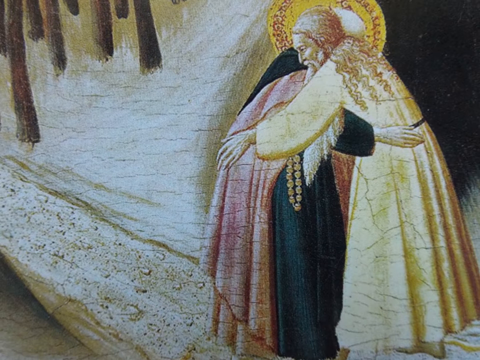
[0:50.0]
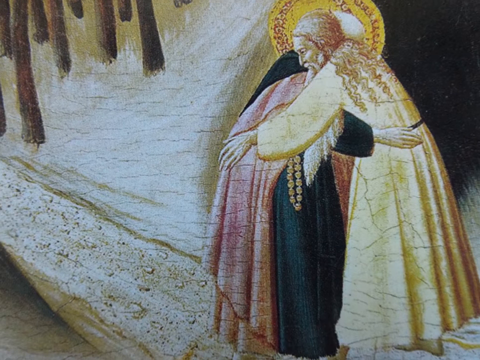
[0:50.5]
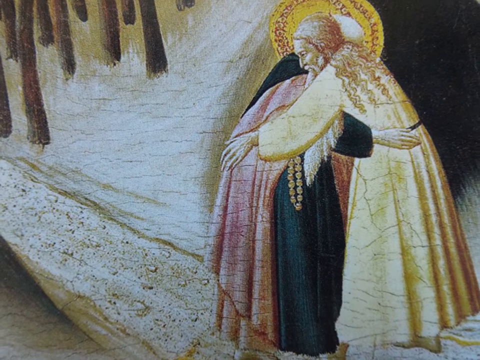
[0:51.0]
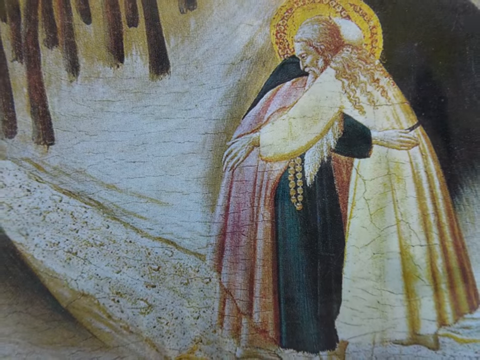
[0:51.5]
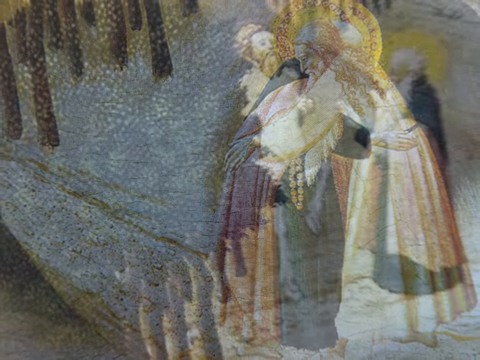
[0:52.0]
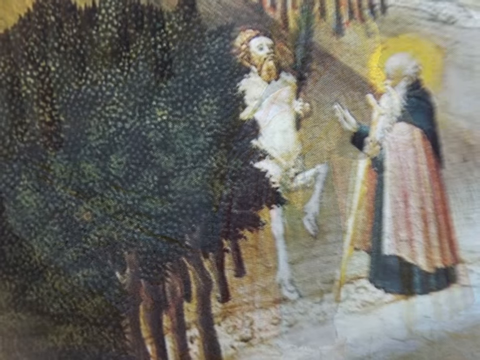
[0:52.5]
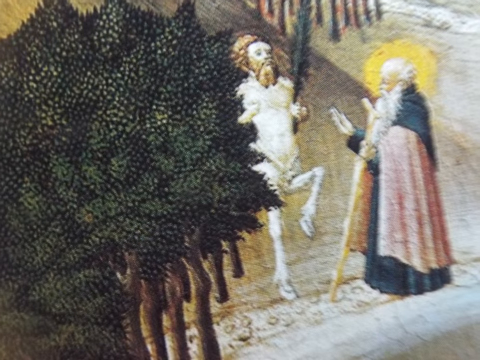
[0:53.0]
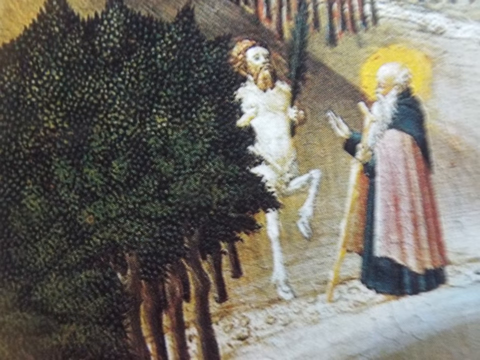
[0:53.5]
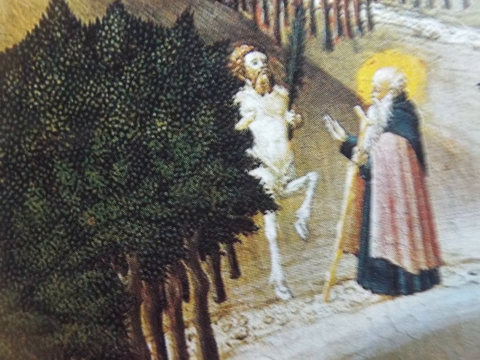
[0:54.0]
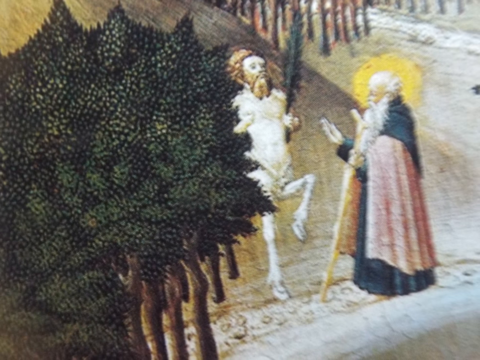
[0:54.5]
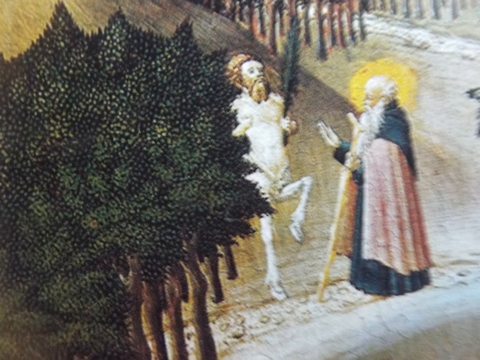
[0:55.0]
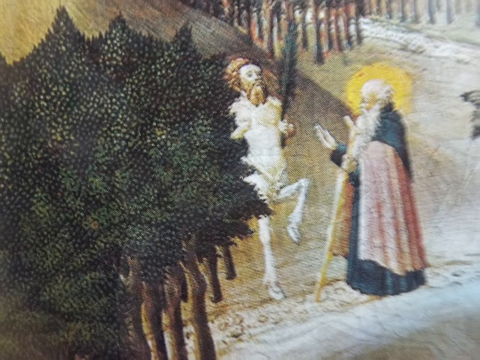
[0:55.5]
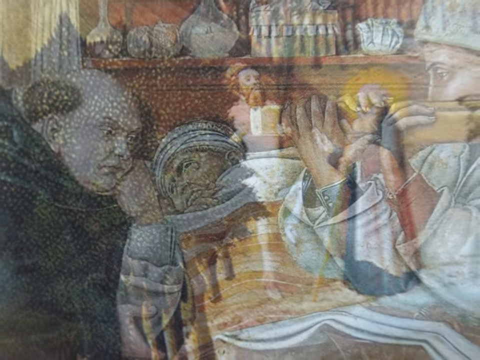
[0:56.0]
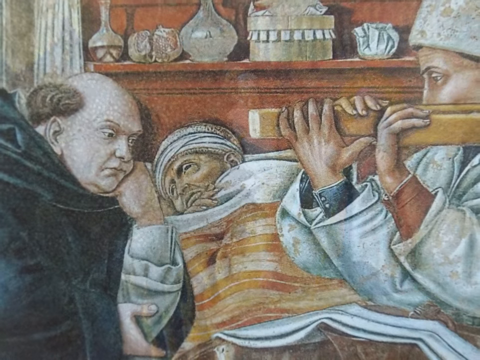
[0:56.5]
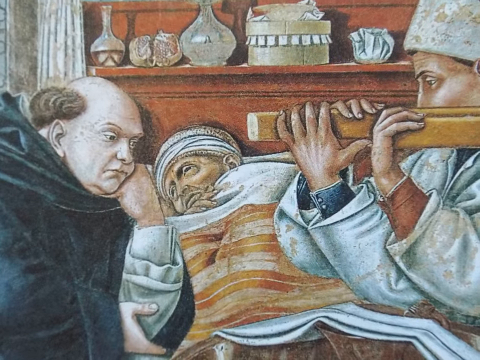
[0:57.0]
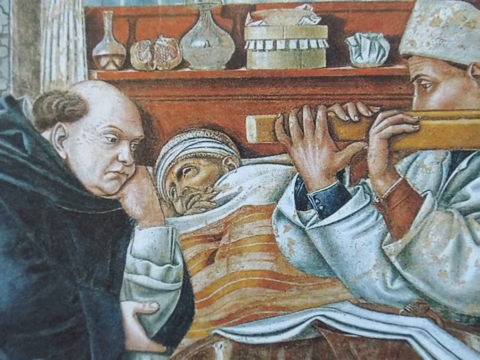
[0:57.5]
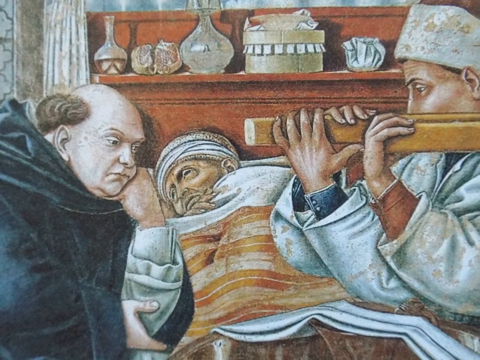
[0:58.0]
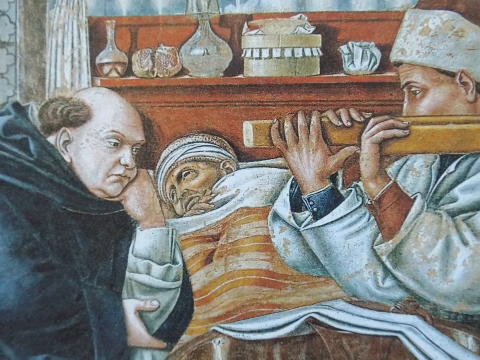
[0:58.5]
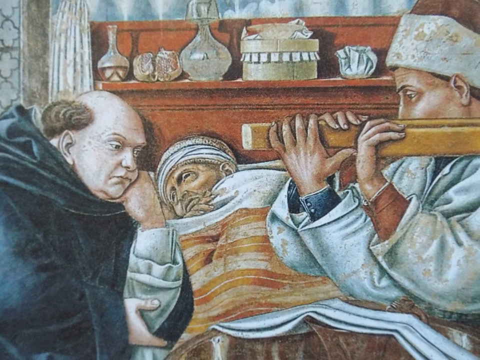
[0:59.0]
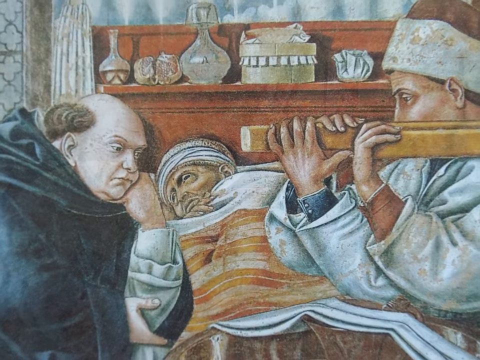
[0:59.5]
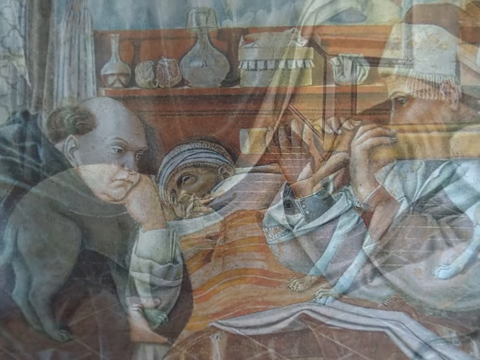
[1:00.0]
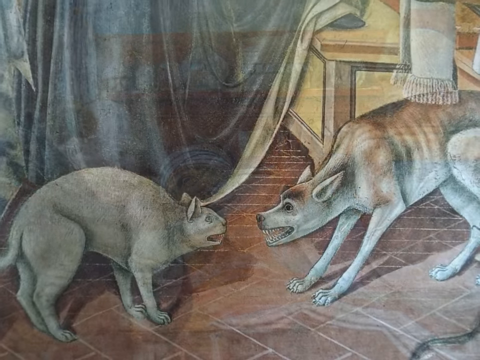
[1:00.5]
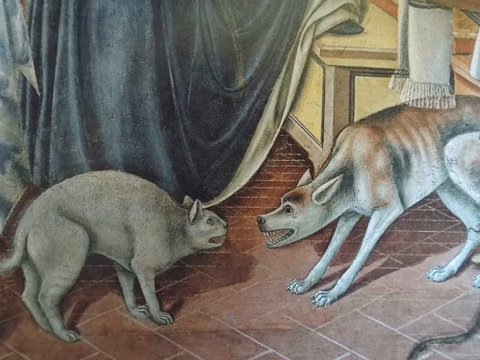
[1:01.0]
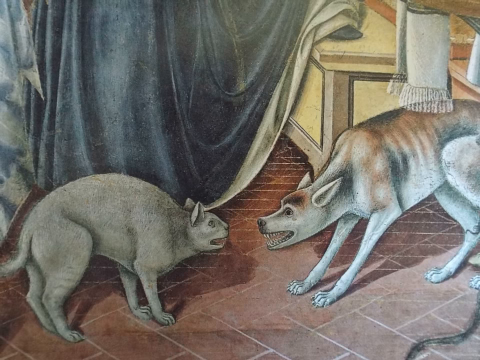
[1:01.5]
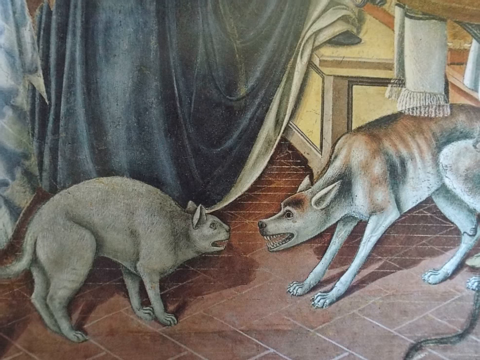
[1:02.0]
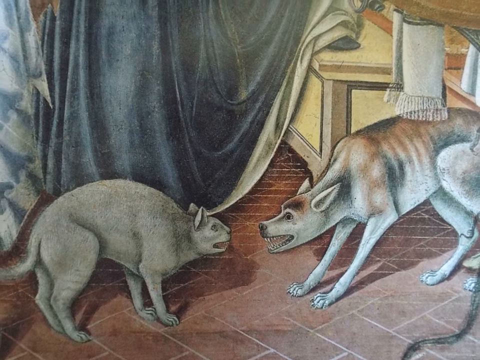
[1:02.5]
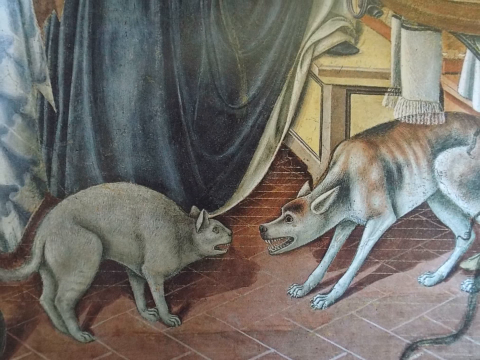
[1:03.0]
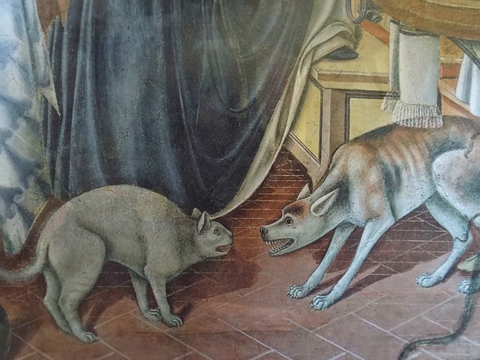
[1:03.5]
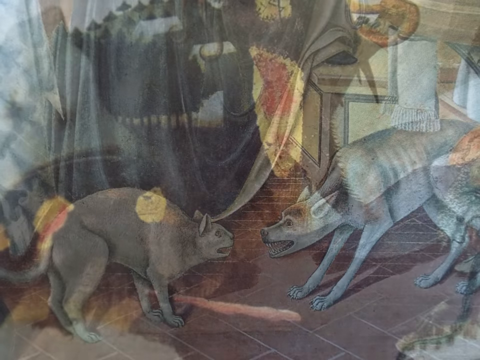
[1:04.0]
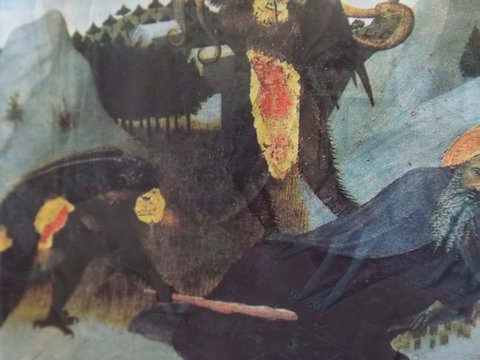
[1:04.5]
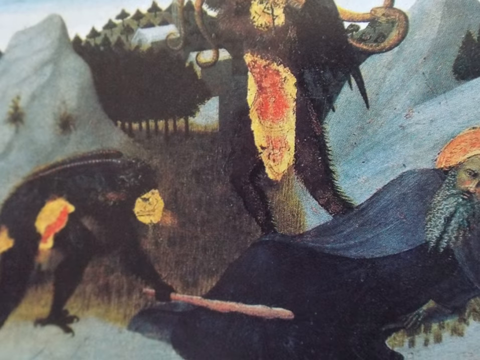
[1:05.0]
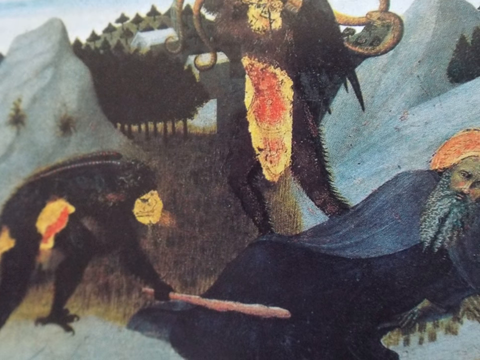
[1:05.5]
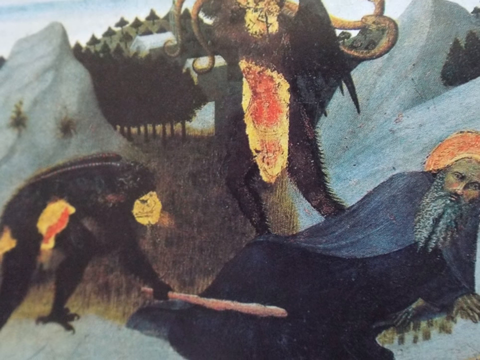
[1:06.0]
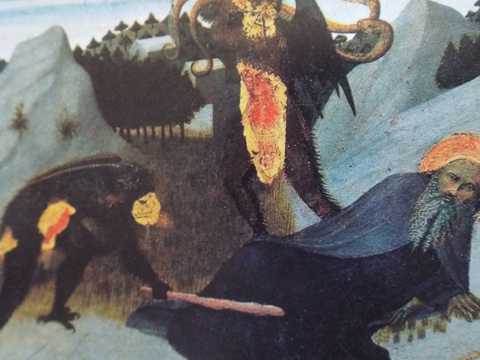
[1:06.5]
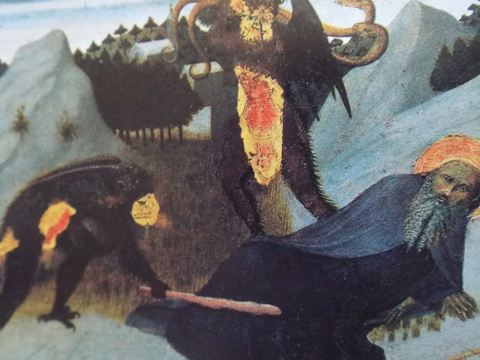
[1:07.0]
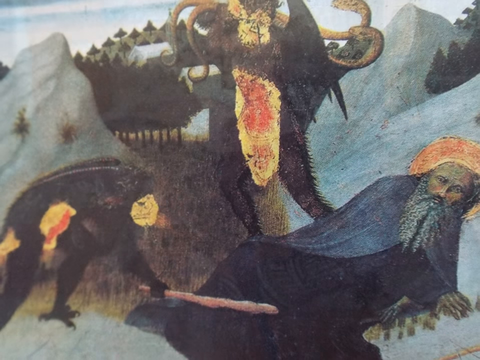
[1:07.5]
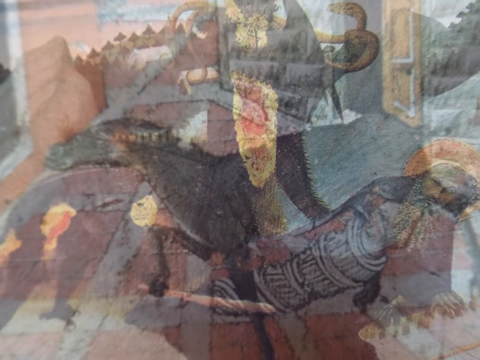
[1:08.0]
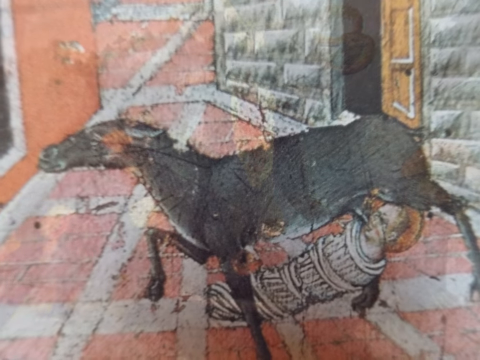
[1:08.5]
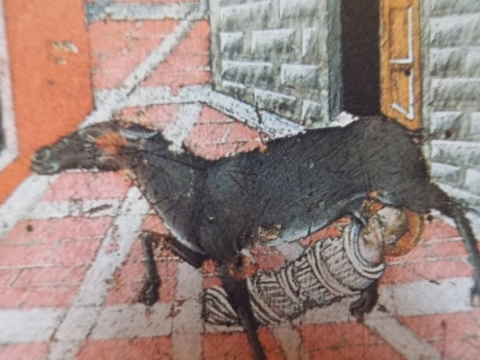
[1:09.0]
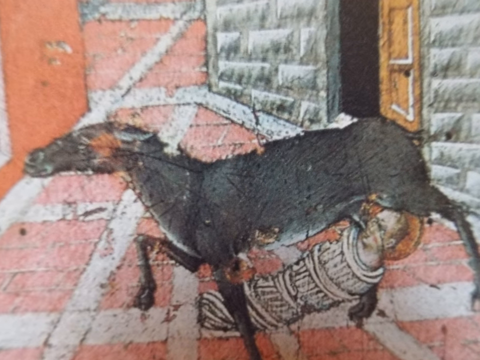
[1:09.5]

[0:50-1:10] A closer view shows the man standing naked on top of the hill. His feet look like hooves and are very bony, and in his left hand he holds a branch of the tree with leaves sort of like needles; the branch is quite long. The scene shifts to a different picture of a sick man in a bed, his head wrapped, in a striped blanket; on his headboard are several vases, jars and objects. There is a man on each side of him. The man on the left is white and bald except for little bushes of hair from the temples to the back; he leans on his fist in thought and wears a blue cloak. On the right, a man who looks Arabic, in a white robe, holds a bar, and there appear to be three hands: two on the outside and one on the inside. Next, a dog and a cat growl at each other. Then a man with a golden halo and a curly beard lays on the ground, and standing above him is a creature with red and yellow flames in its belly, long almost horn- or tusk-like things that curl around, hair, and wings. Another similar-looking creature aims a stick at the man's legs; it has the same yellow on the face, an orange belly, and a little orange coming out of its butt. A different image shows a man with a halo inside the Leaning Tower of Pisa, with a black donkey or horse trampling on top of him.